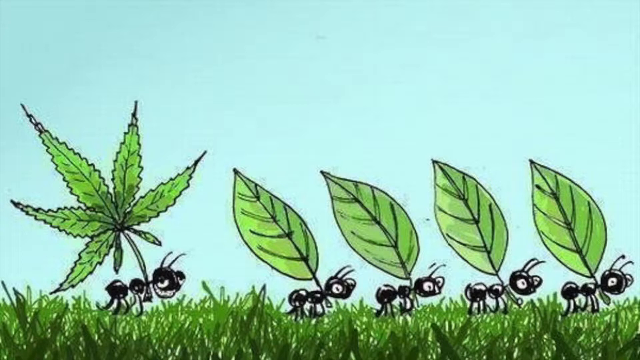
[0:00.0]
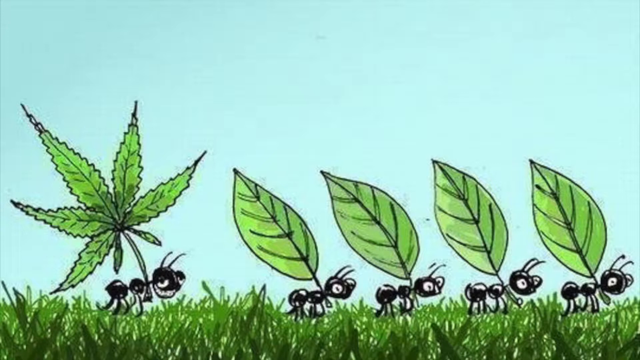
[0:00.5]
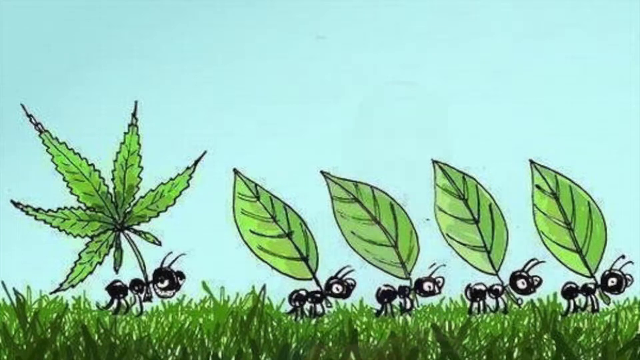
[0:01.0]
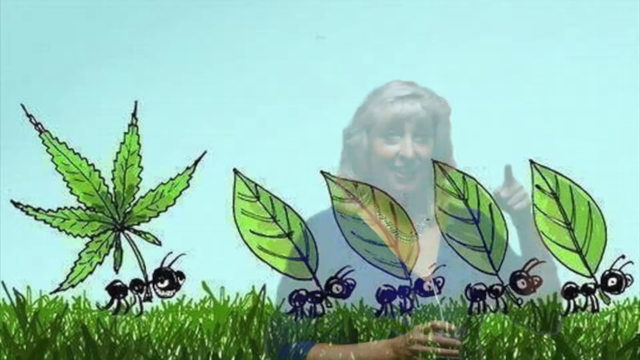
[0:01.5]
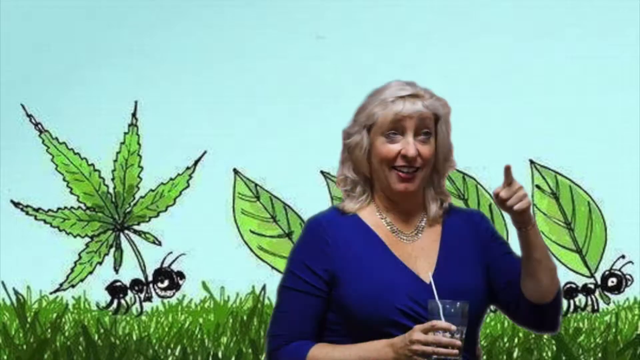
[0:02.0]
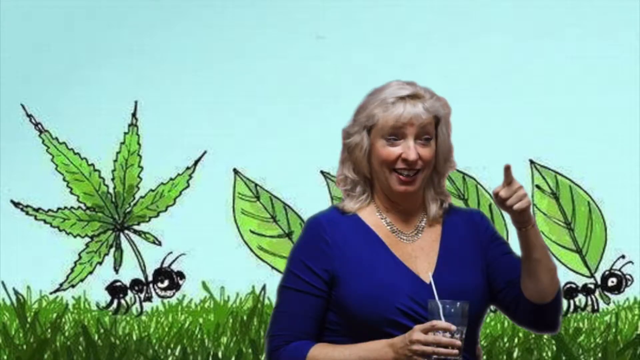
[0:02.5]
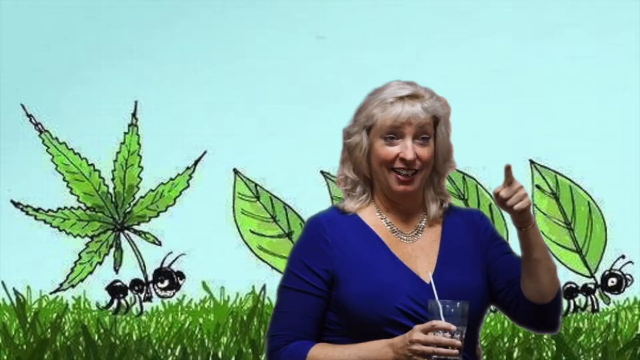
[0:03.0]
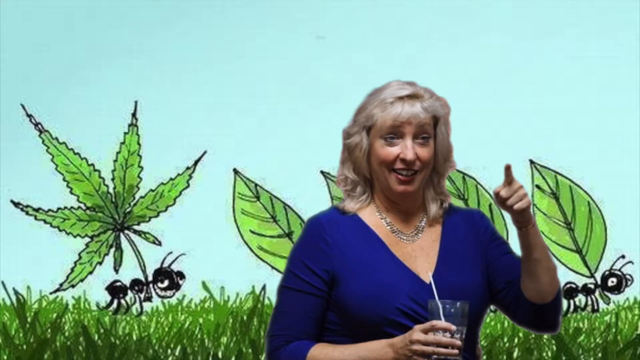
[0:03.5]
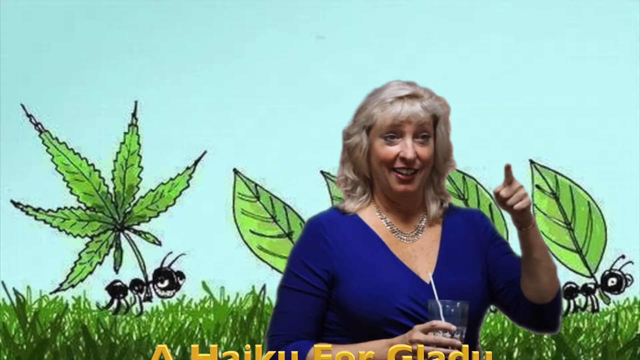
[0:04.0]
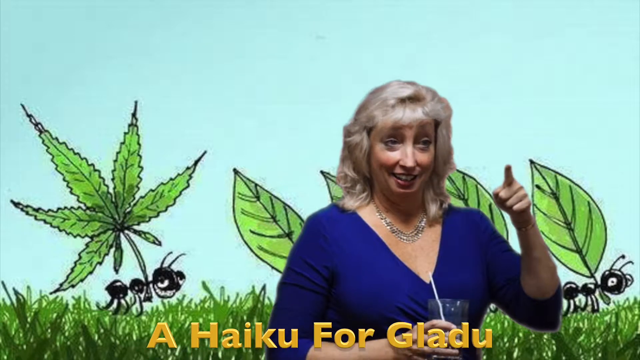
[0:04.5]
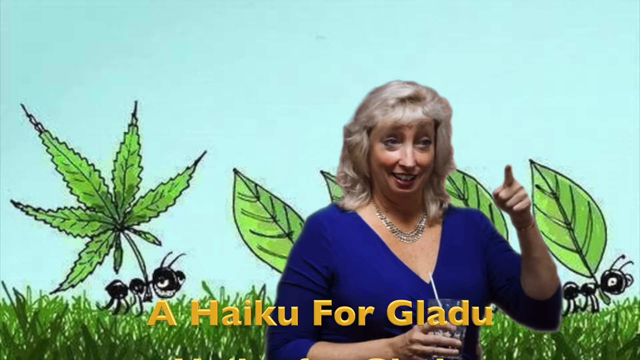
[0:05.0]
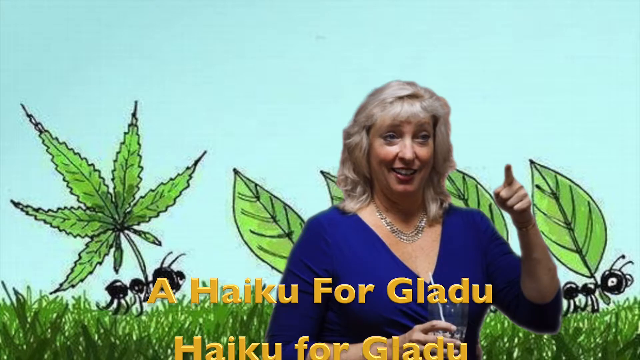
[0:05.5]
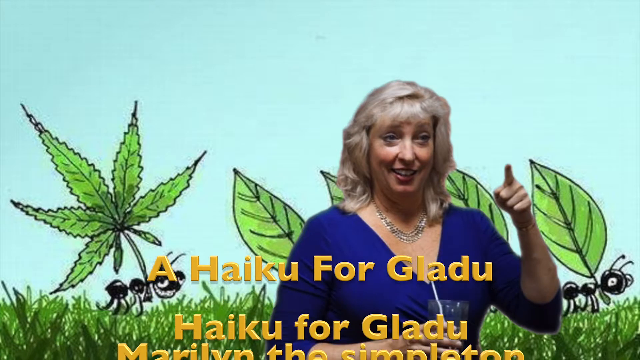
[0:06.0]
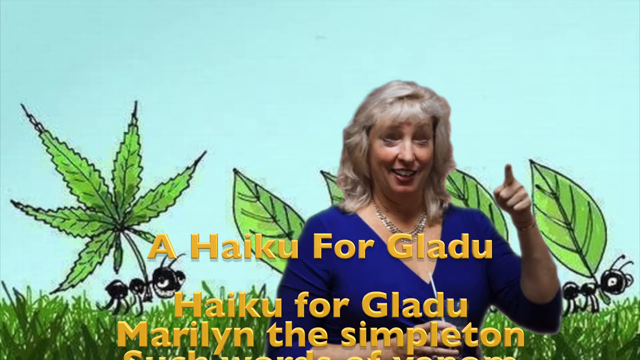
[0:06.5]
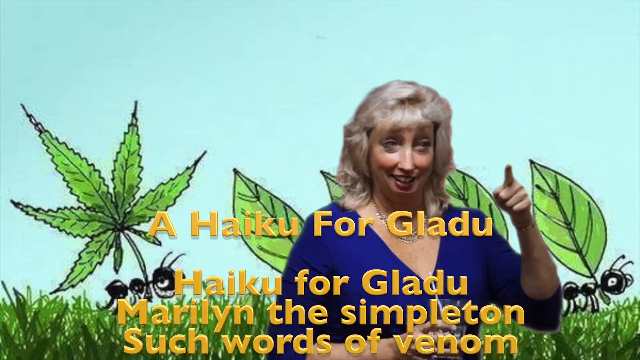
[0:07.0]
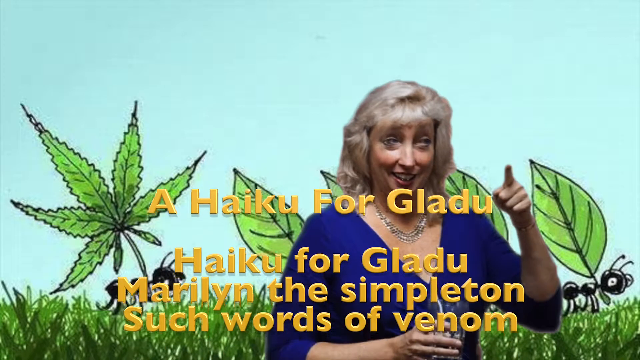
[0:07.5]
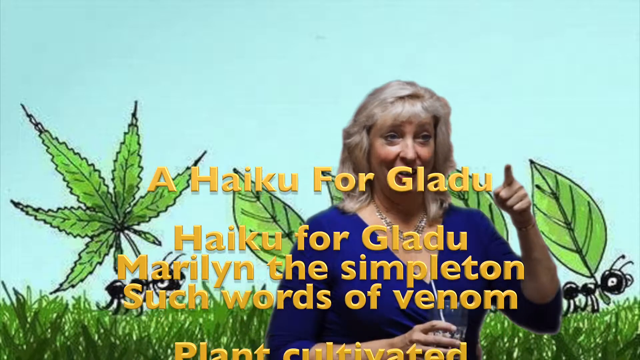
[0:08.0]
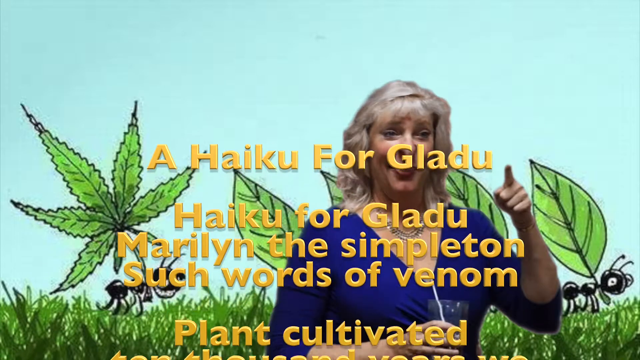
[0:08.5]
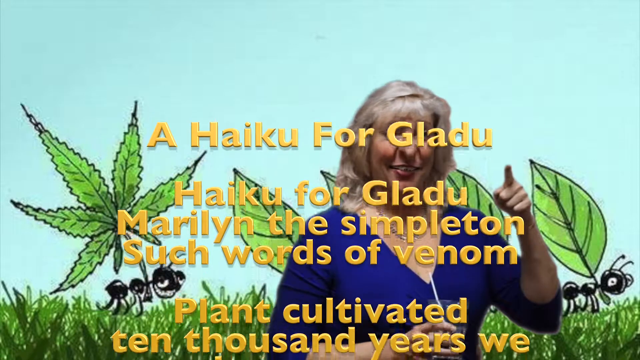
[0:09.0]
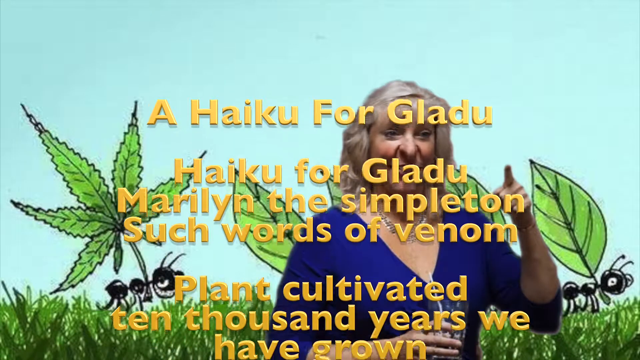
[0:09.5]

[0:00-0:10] An animation shows a line of five ants, one following another, walking along the grass. The ant in front carries a green, oval-shaped leaf, and the first four ants all carry the same type of leaf. The last ant looks visibly more tired and holds a different kind of leaf, which has five sections, is pointed outwards and is more detailed. Text appears on the screen reading "a haiku for gladu, haiku for gladu, Marilyn the simpleton, such words of venom." A woman also appears; she is a static frame and appears to just nod her head up and down.